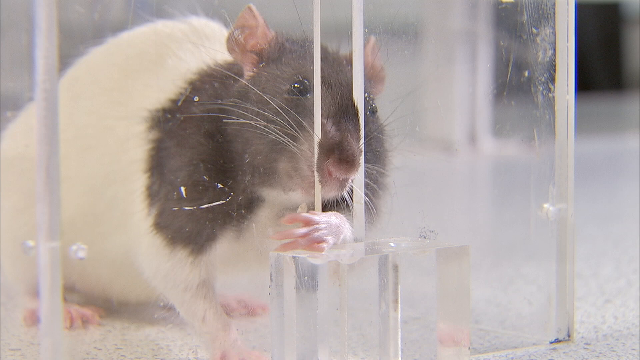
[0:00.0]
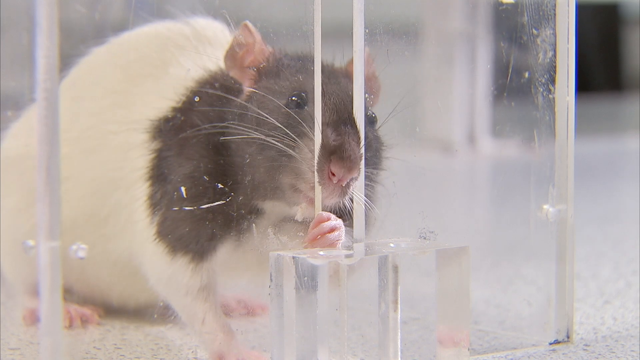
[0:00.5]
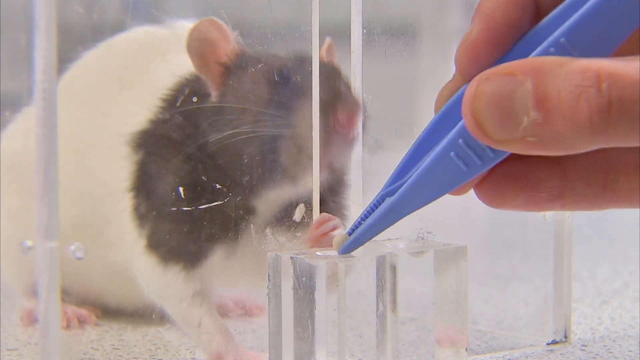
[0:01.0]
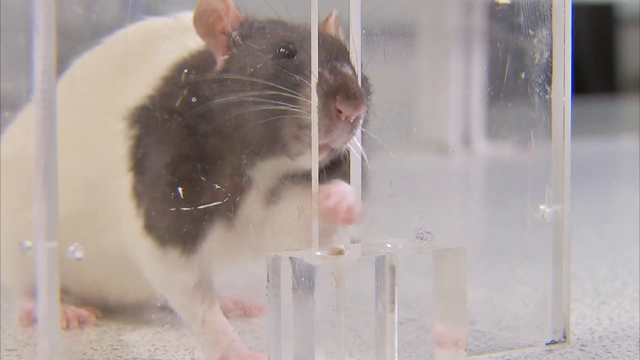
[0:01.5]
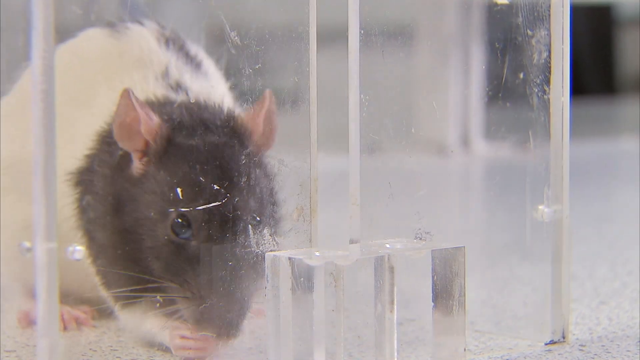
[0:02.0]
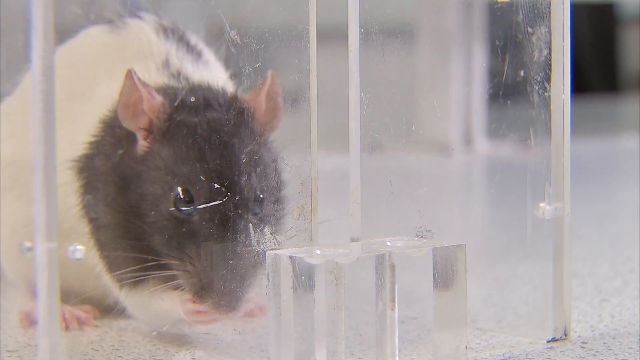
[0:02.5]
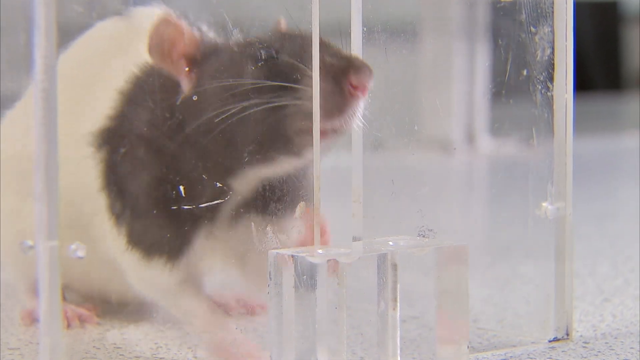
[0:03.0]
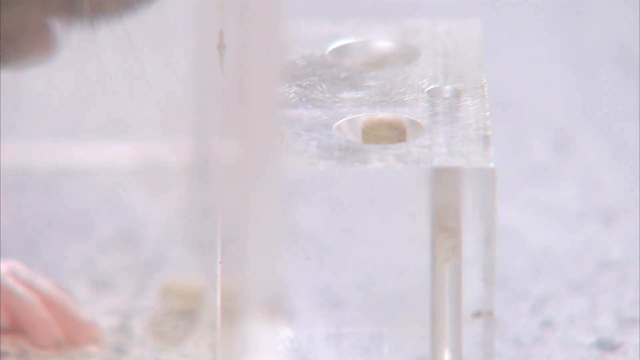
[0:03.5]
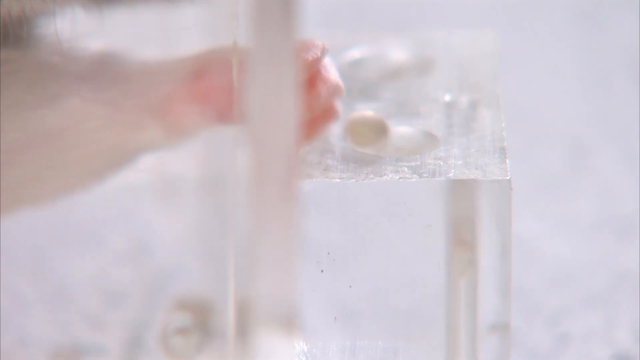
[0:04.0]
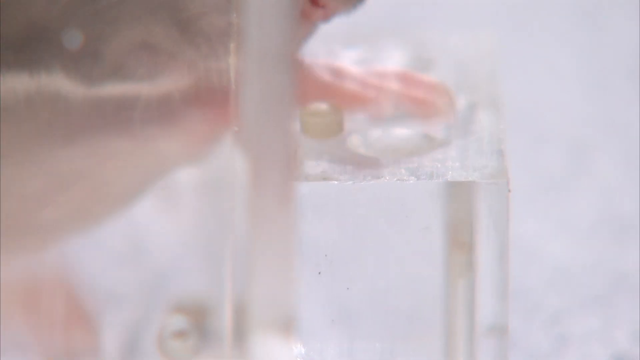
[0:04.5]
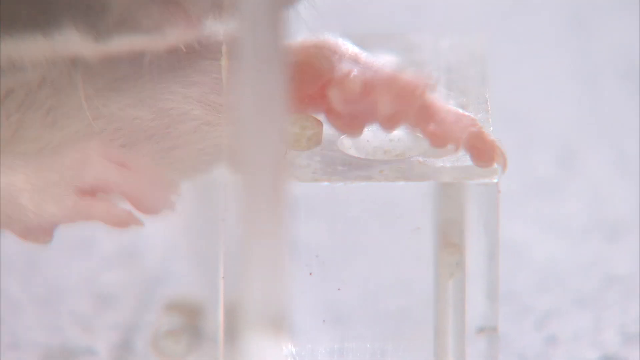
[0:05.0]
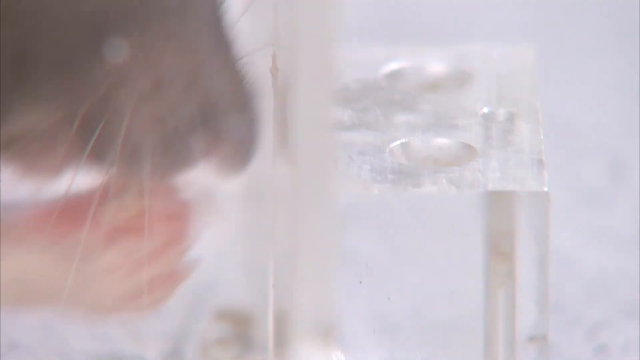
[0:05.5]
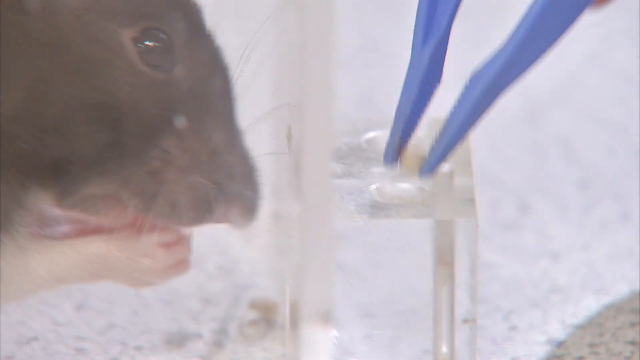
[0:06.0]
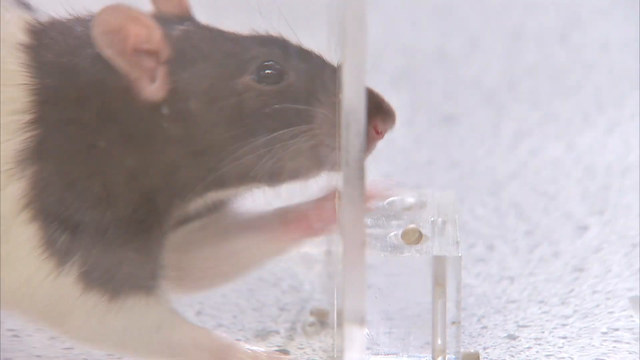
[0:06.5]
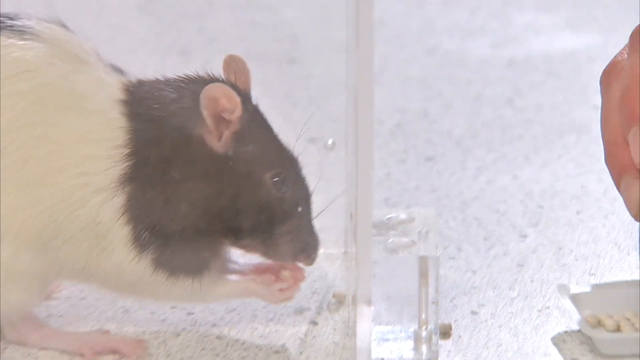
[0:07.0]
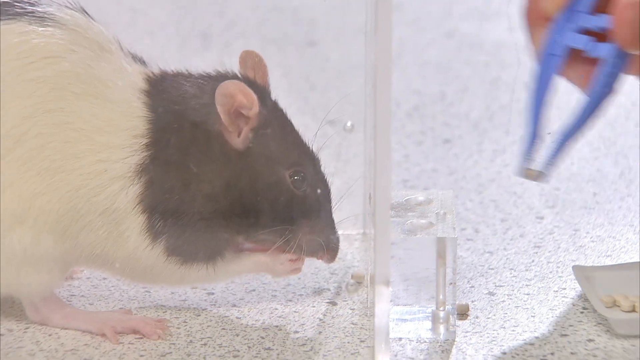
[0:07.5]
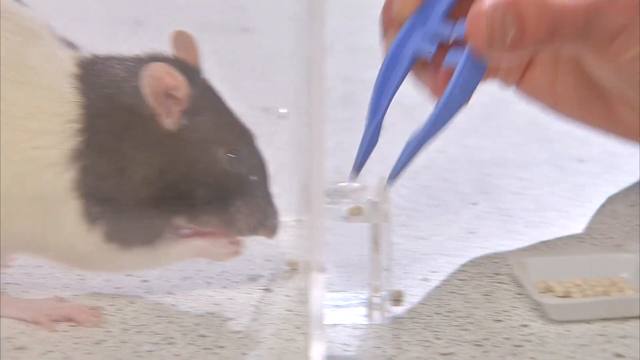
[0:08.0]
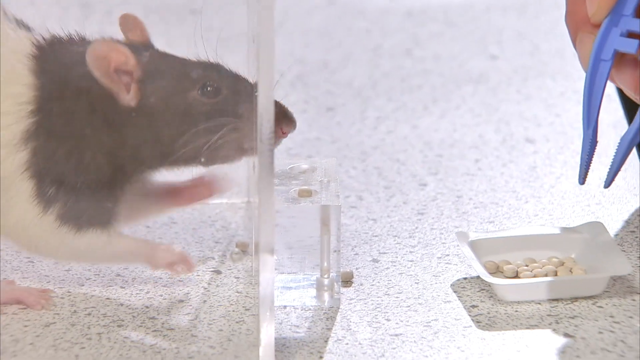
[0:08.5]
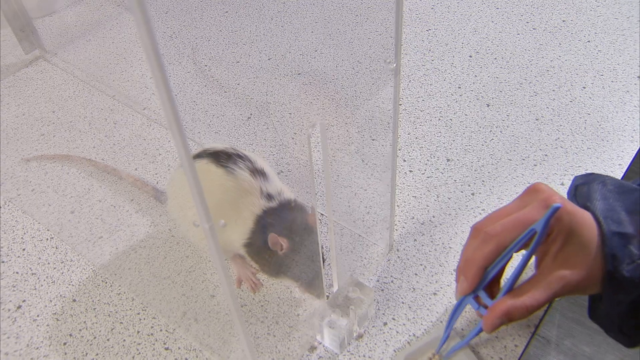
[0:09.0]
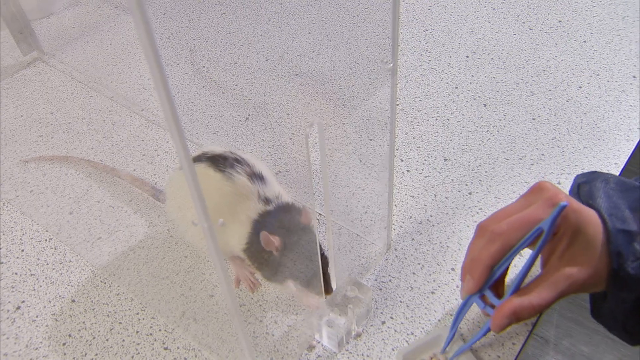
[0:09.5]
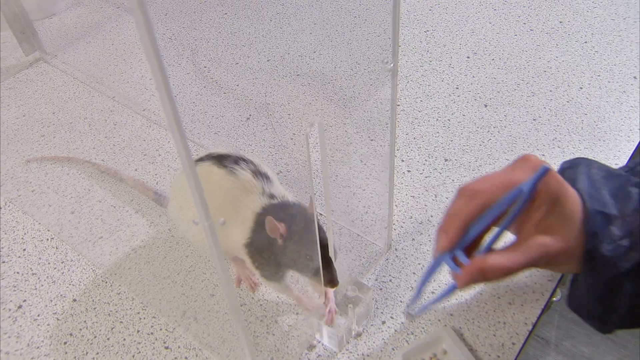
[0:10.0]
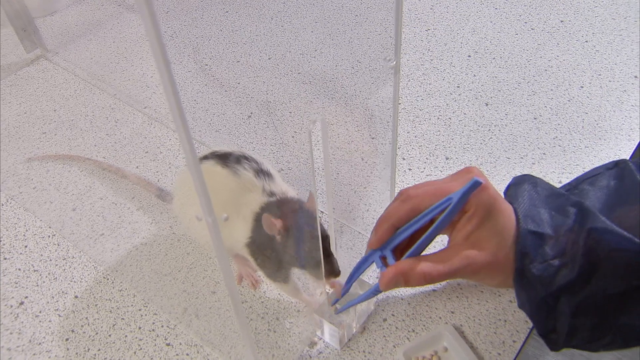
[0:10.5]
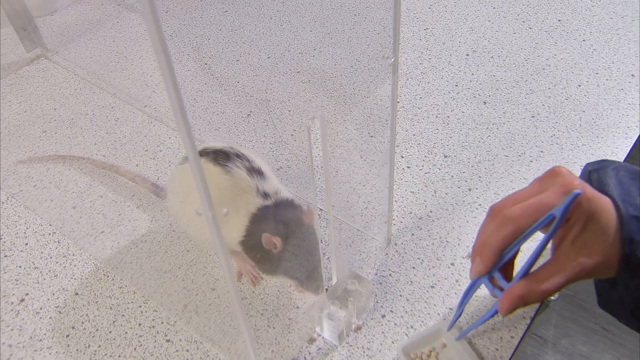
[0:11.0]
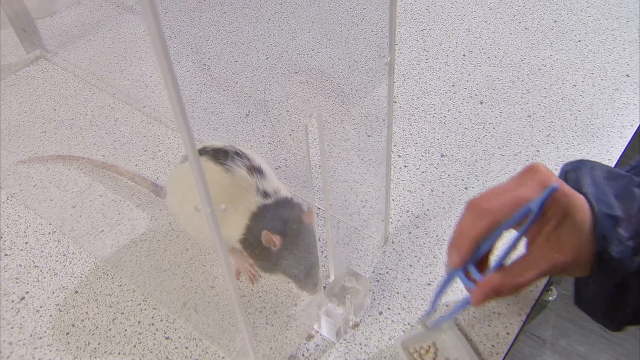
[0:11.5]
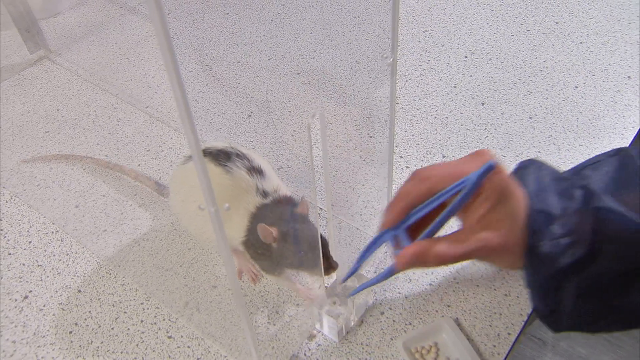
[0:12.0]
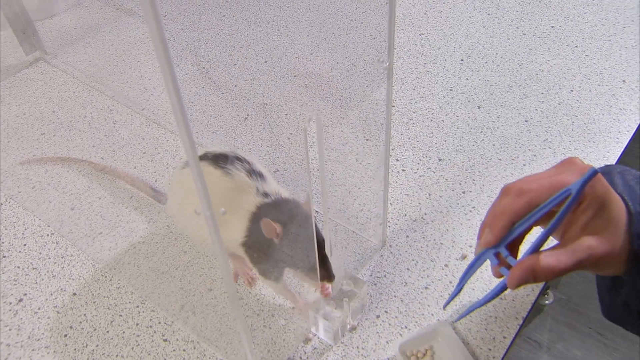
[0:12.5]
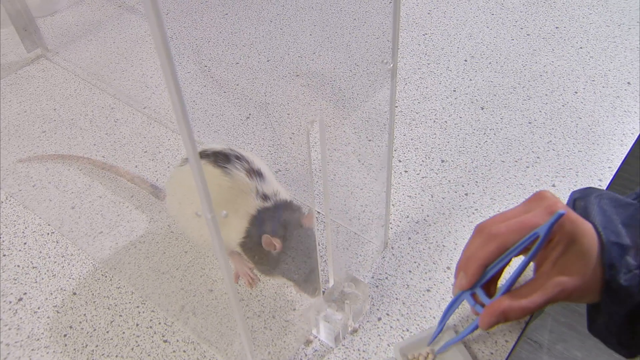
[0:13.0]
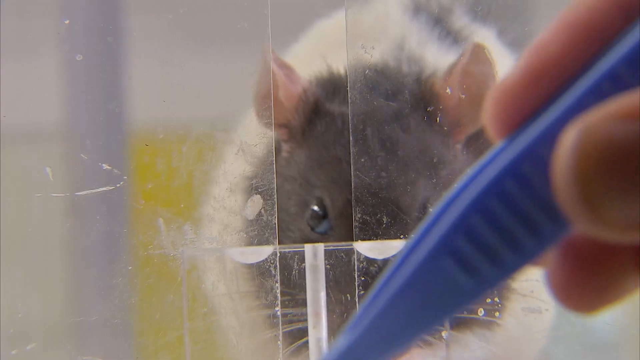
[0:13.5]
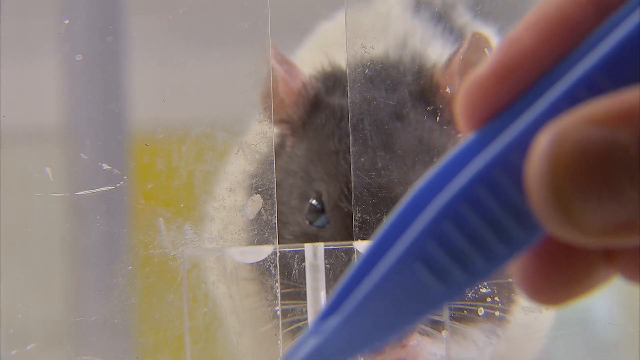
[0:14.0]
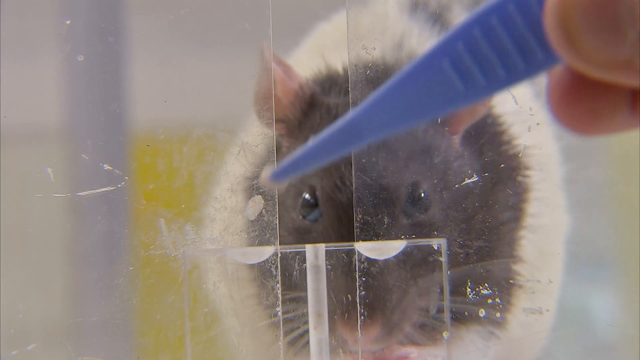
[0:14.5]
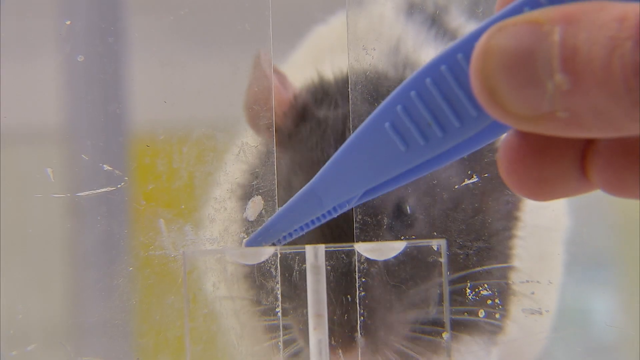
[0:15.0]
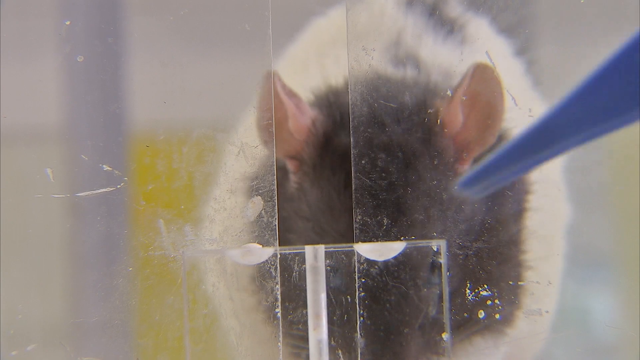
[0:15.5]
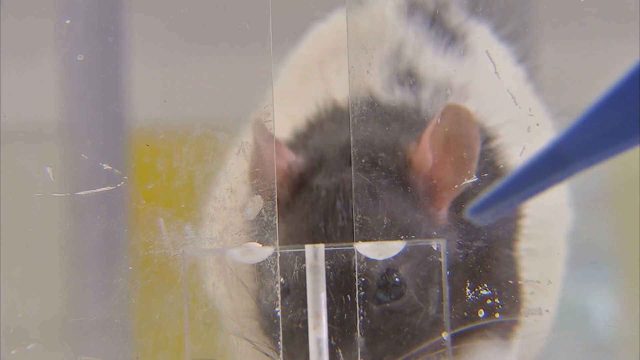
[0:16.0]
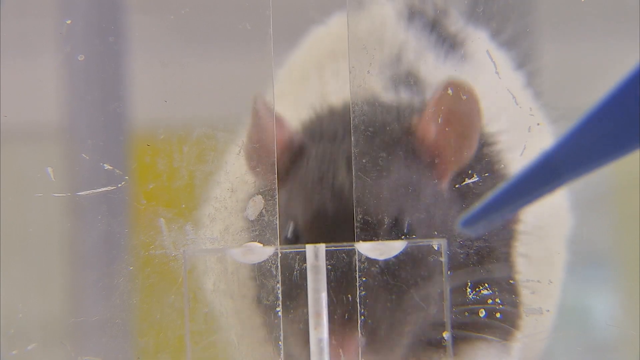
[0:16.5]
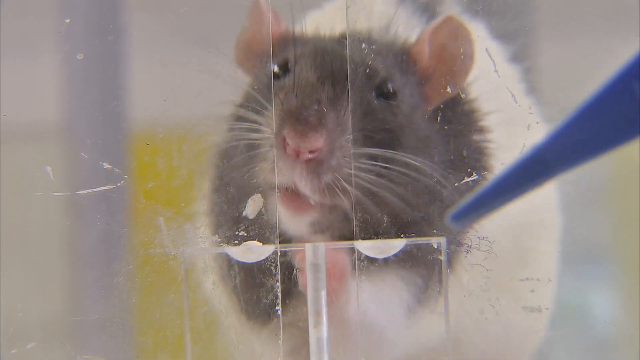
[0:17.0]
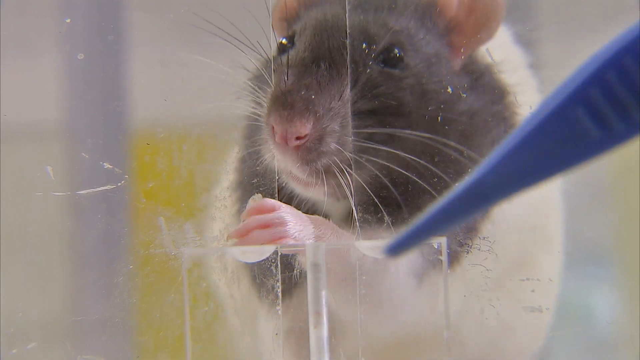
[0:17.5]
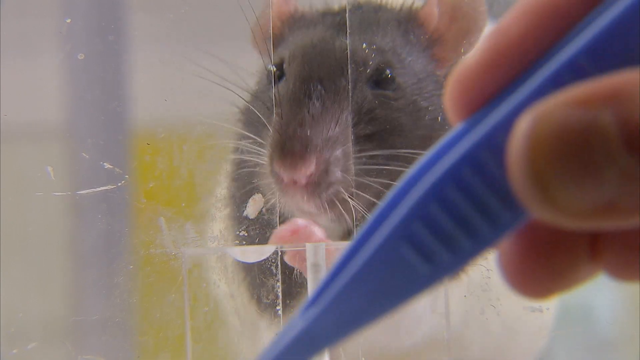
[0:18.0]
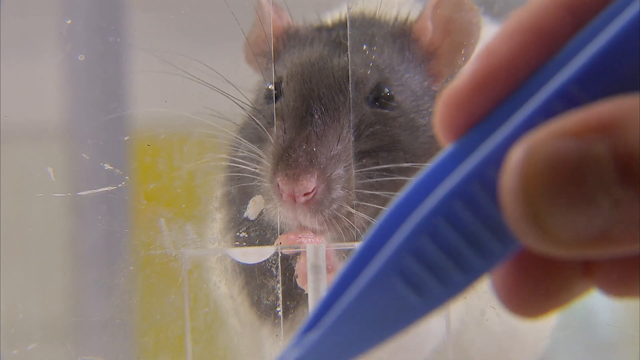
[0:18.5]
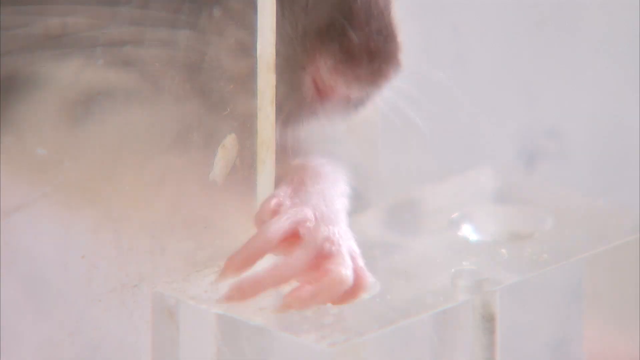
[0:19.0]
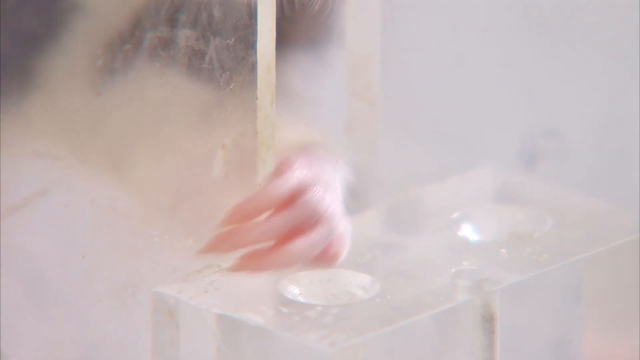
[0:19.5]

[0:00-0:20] The setting seems to be some sort of laboratory. A rat in a plastic-looking cage is fed little bits of food by a scientist wearing an overall, who uses tweezers to pass the food to the rat through a gap in the cage. The scientist seems to place each piece on a little plastic-looking pedestal, and the rat takes the food through the little hole with its hands and eats it. The rat is white and brown with little brown spots, and has a brown head and black eyes. The tweezers seem to be safety tweezers, purely plastic with no sharp areas. In total the scientist passes seven pieces of food to the rat by placing them on the pedestal, and the rat retrieves each one. The table the rat is on is white with black spots.